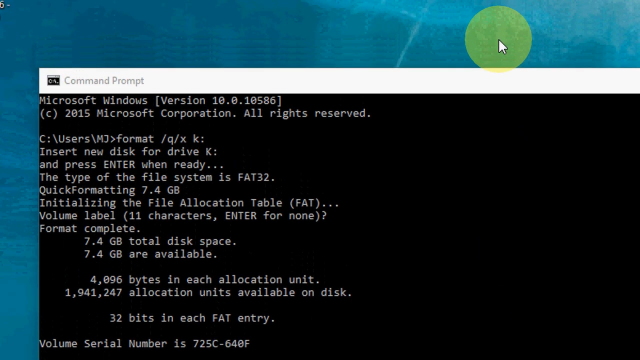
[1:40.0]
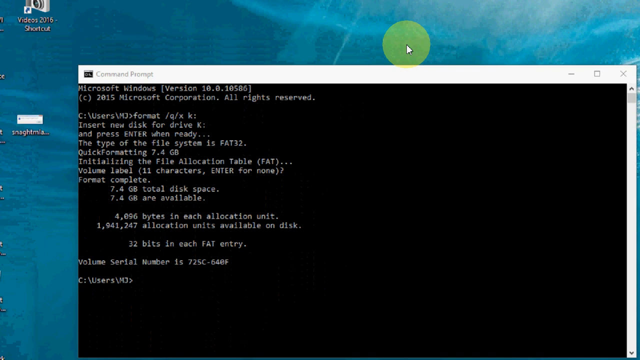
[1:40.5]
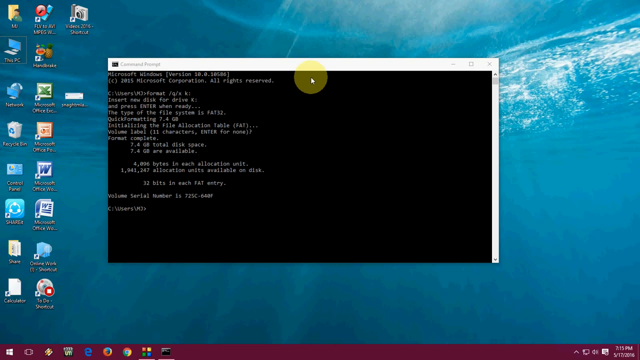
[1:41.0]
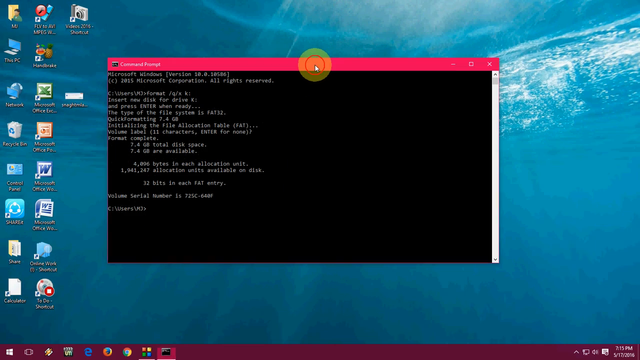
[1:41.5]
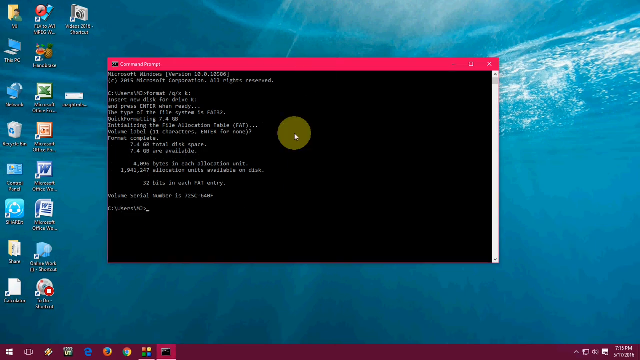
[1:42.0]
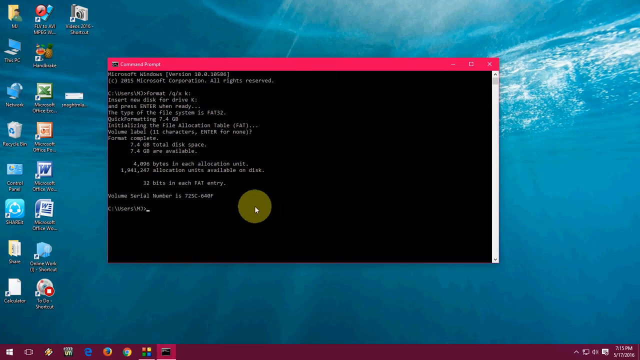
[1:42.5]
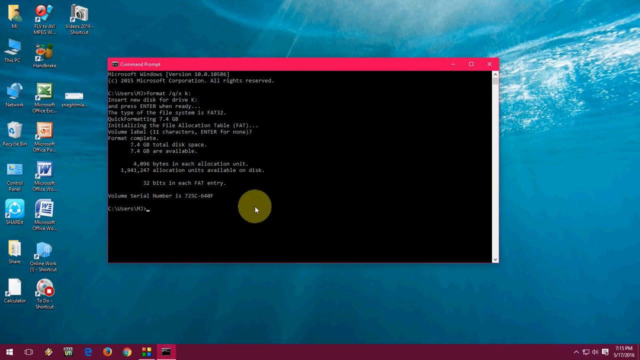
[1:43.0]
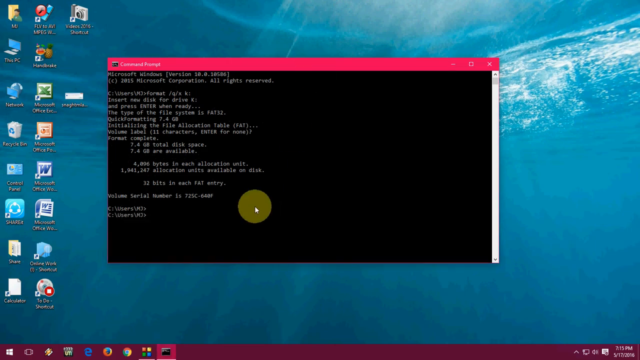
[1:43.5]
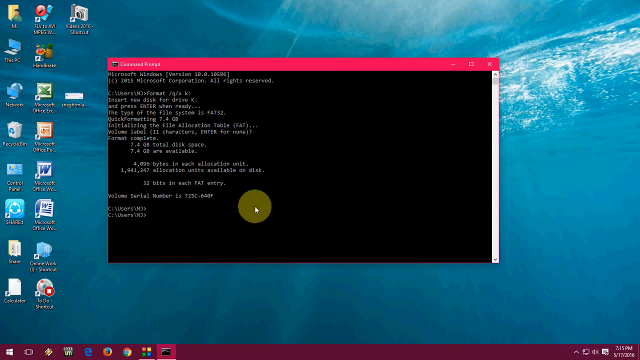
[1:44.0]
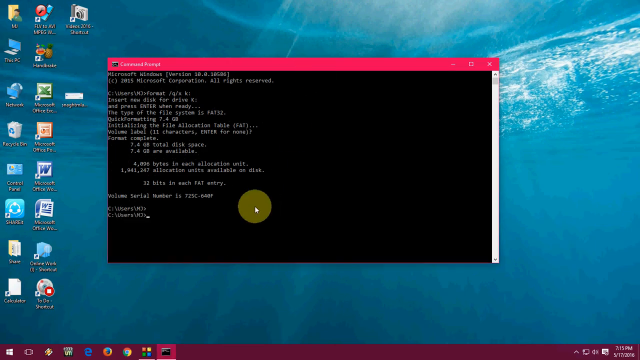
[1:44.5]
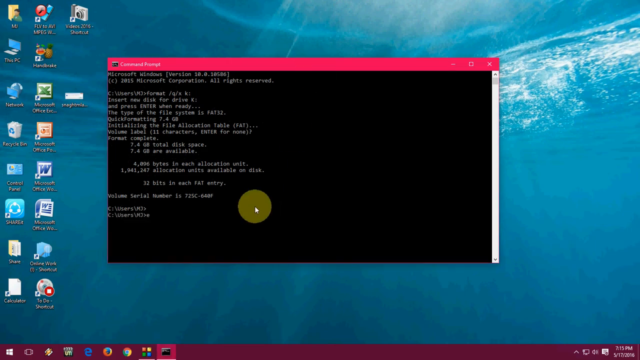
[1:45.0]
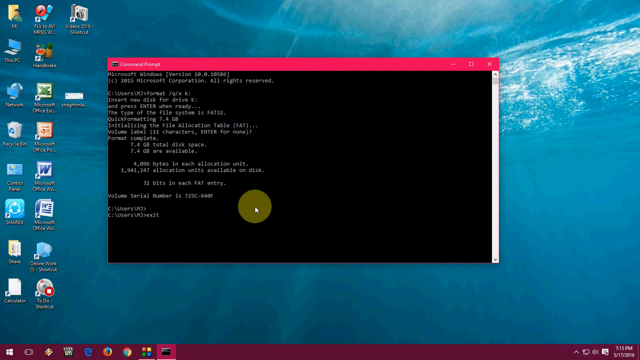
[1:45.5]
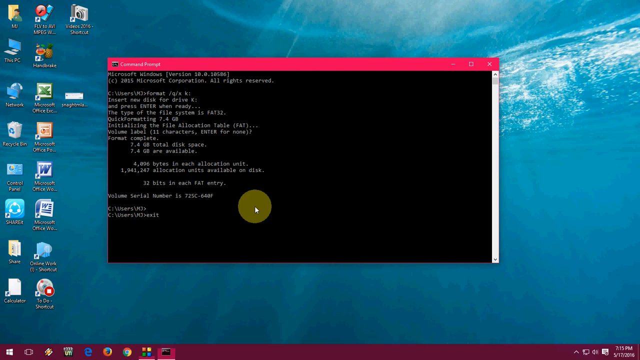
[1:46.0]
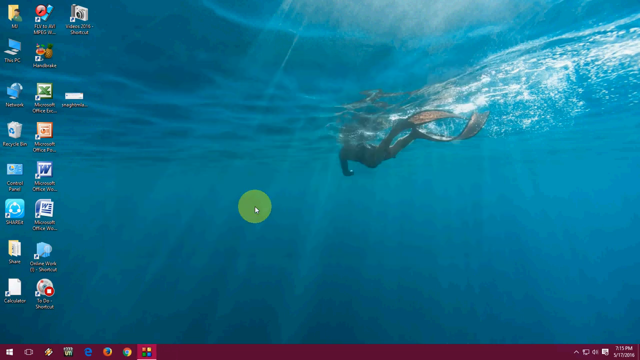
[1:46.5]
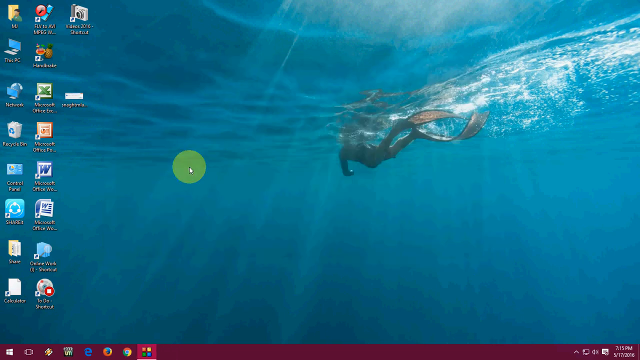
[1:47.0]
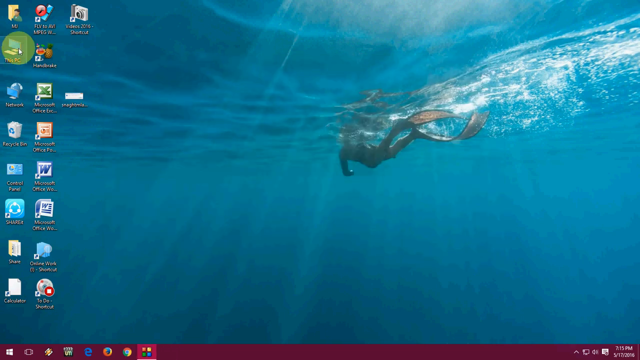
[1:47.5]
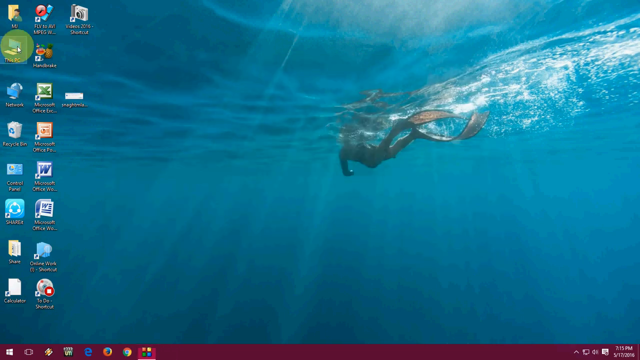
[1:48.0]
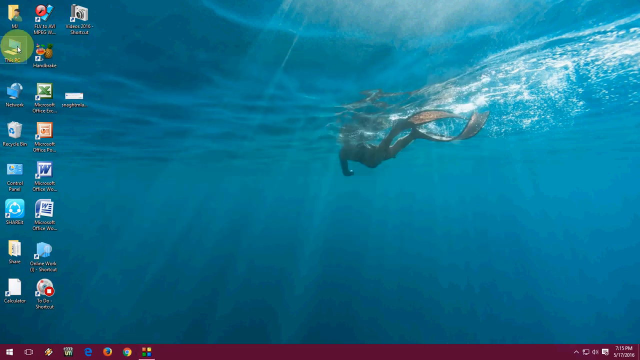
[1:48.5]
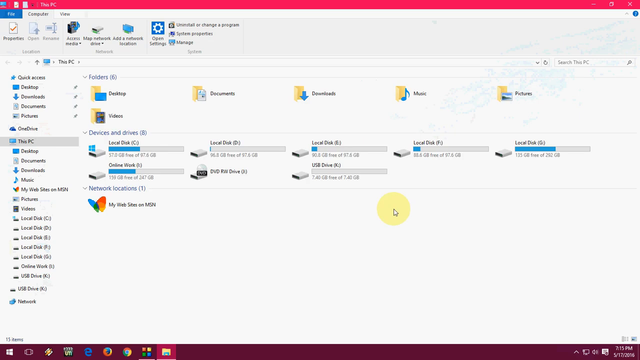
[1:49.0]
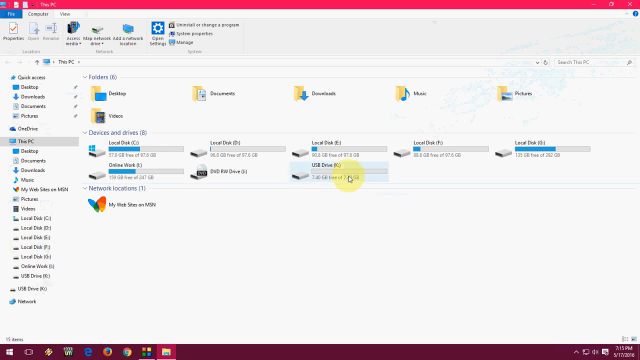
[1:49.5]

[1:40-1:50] The person zooms out to show the entire screen, then types "exit" at the bottom of the Command Prompt; when it is entered, the Command Prompt disappears. They click into This PC at the top, and the window pops open showing Desktop, Documents, Downloads, Music, Pictures and Videos.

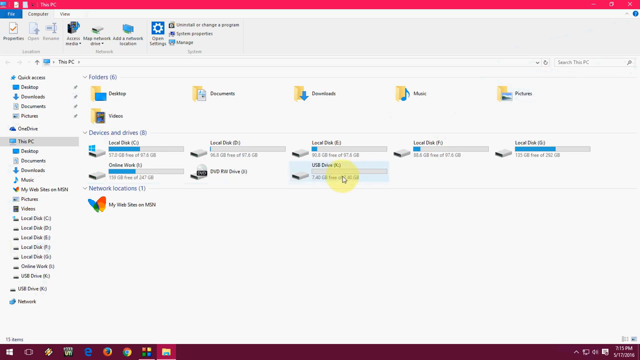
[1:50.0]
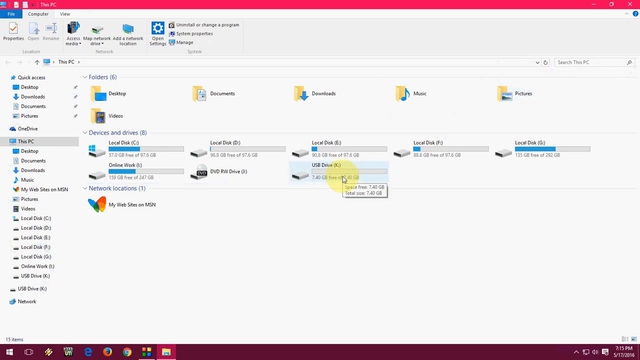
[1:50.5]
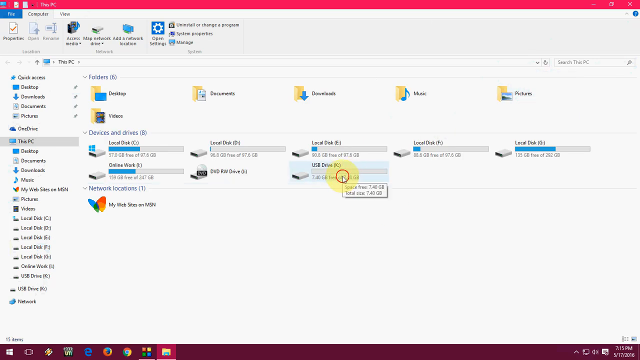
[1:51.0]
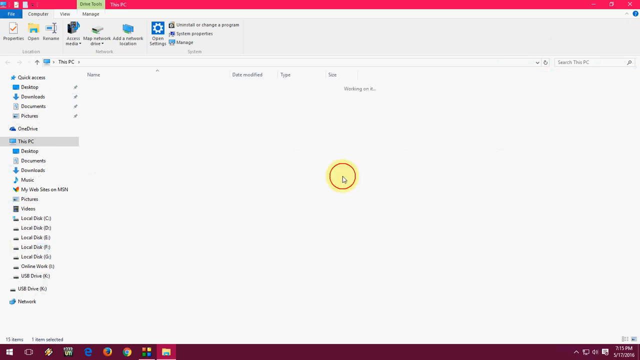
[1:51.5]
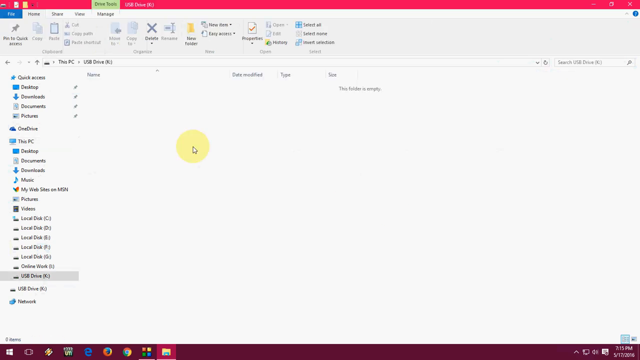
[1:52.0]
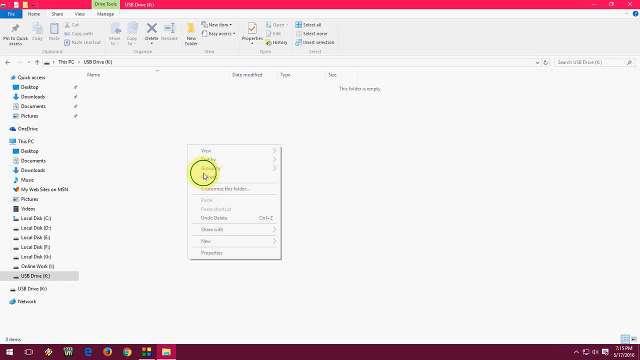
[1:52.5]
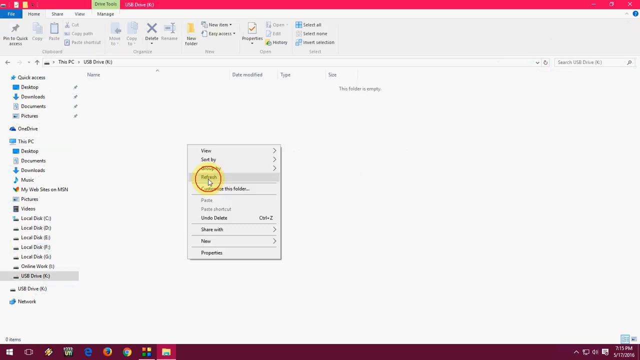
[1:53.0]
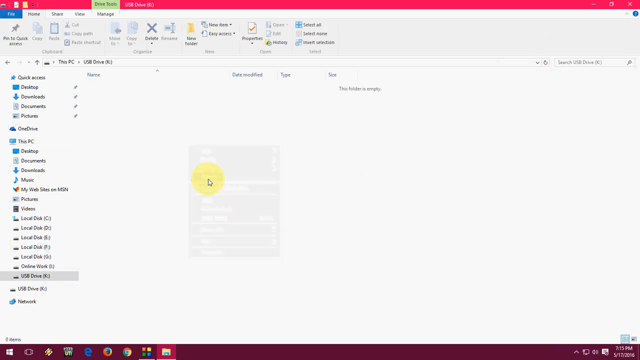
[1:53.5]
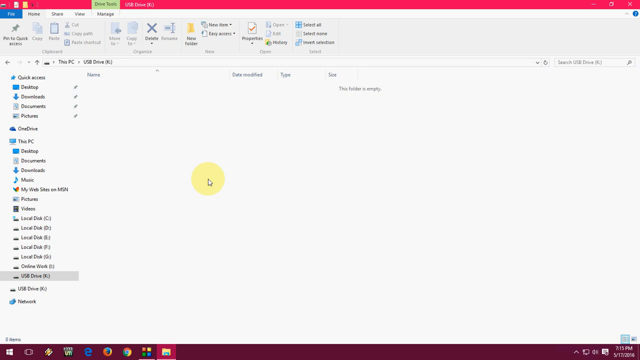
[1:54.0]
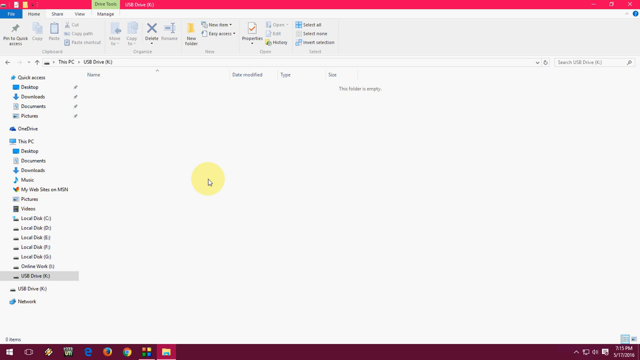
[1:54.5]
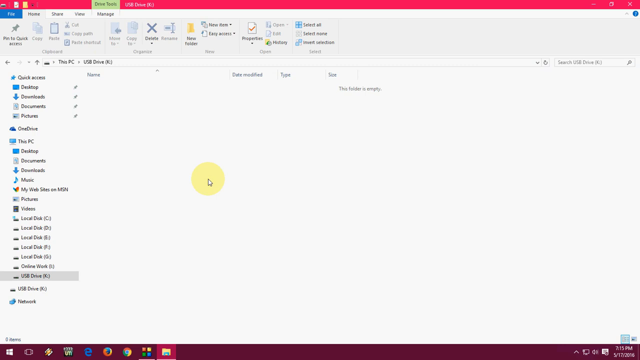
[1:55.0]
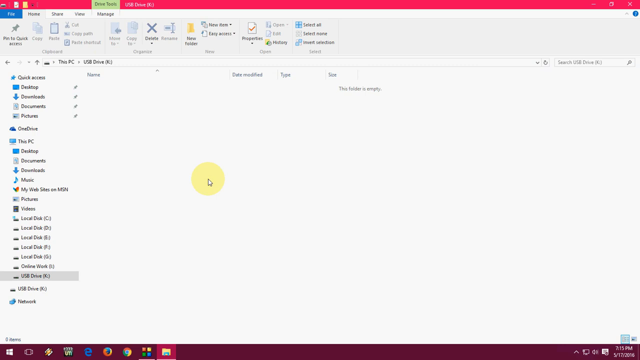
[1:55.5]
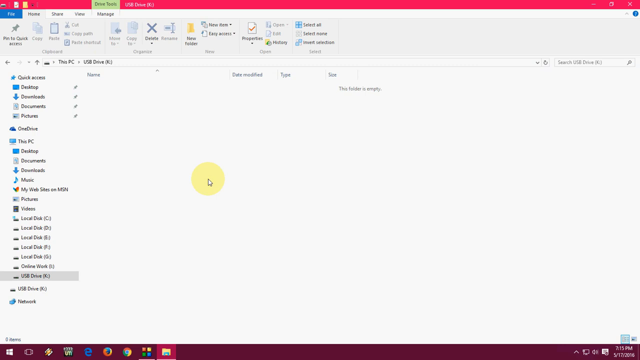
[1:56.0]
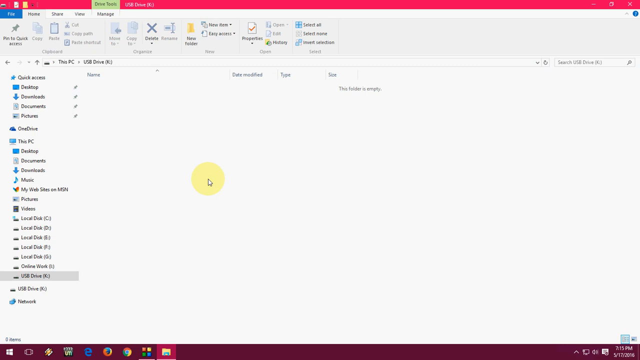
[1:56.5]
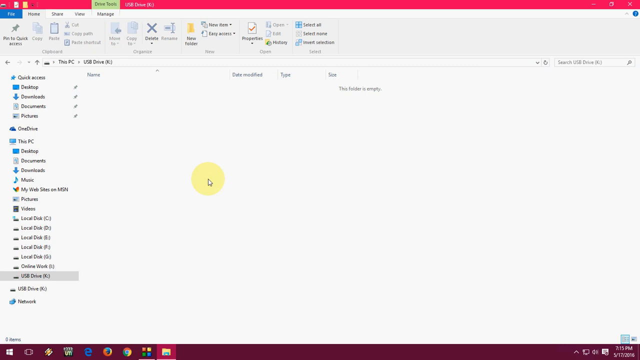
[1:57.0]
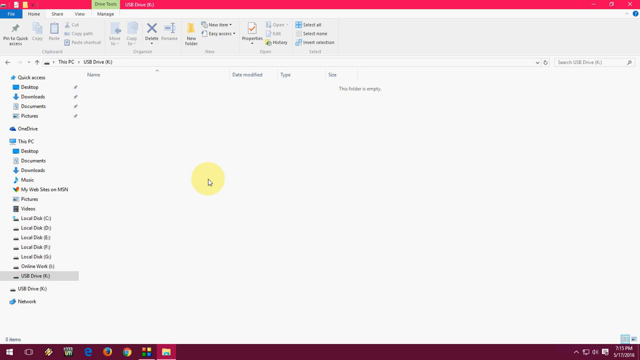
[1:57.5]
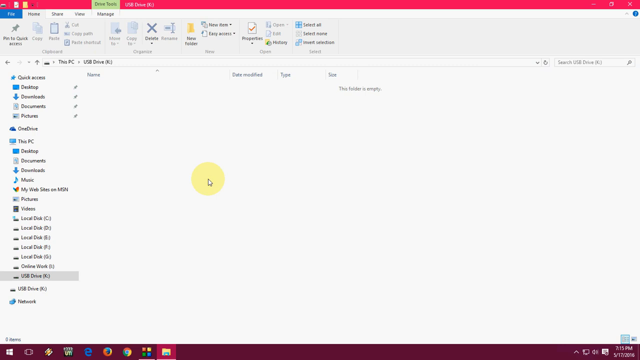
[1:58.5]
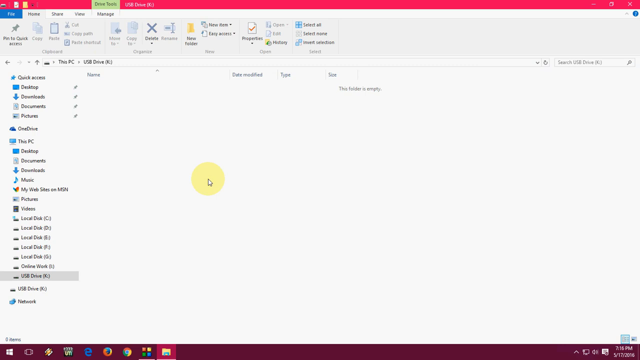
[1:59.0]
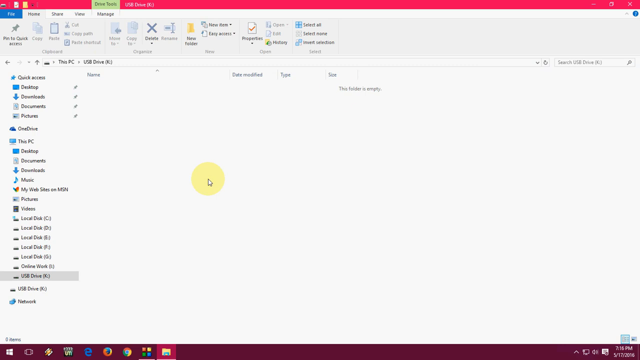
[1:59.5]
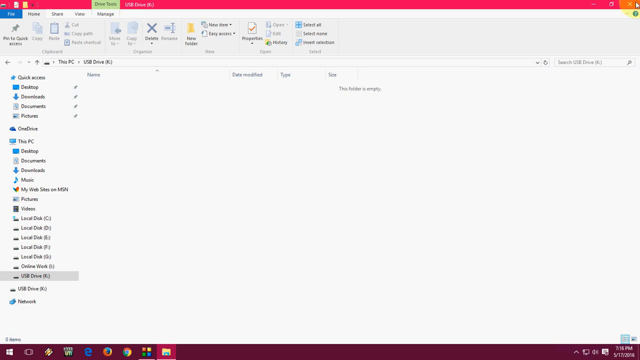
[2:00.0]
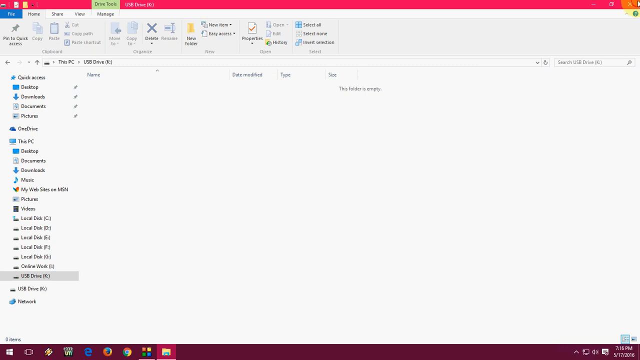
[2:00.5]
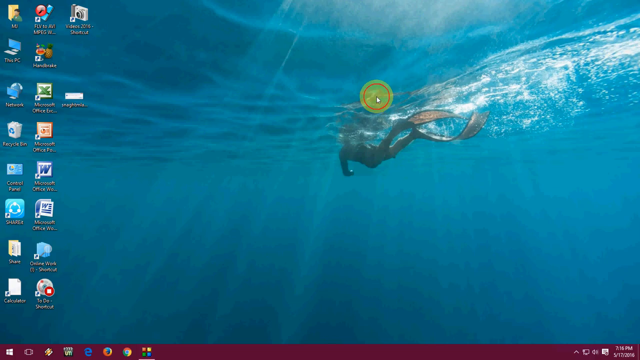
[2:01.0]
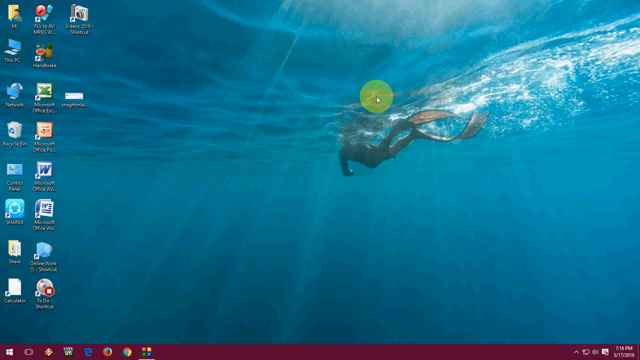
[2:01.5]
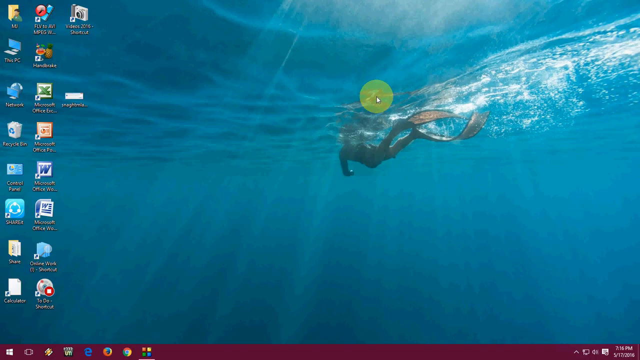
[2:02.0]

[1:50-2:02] The person continues in the This PC window after running the commands that made changes to one of their USB drives. They review the devices and drives: the local disks are all the same, while the online work drive is not. They hover over USB drive K and double-click into it, and there is nothing in it. They right-click and press Refresh, right-click and press Refresh again, and then minimize the window.